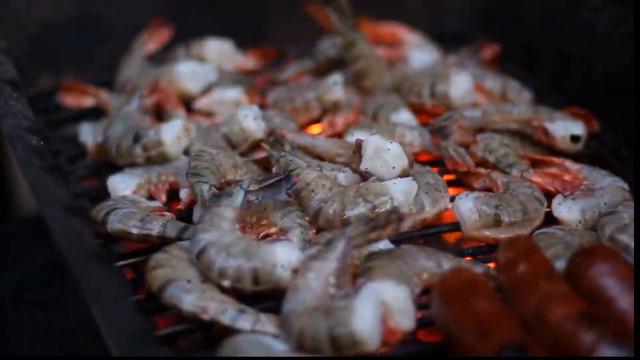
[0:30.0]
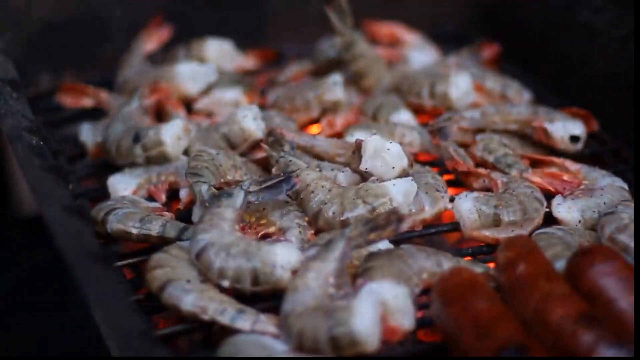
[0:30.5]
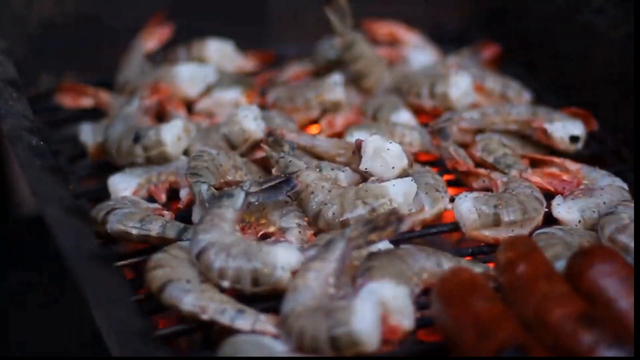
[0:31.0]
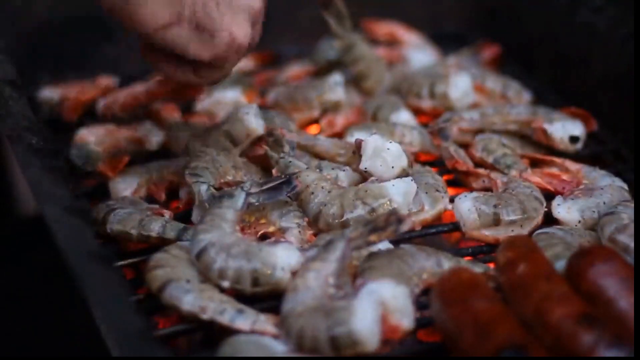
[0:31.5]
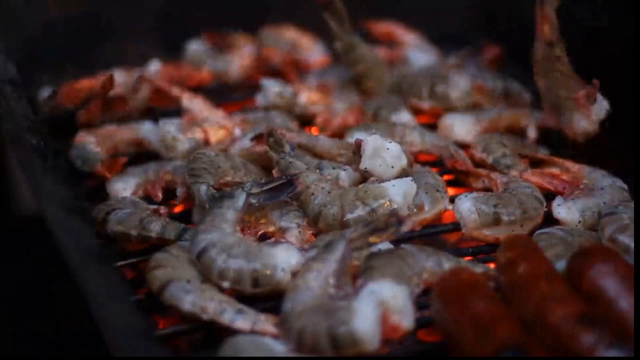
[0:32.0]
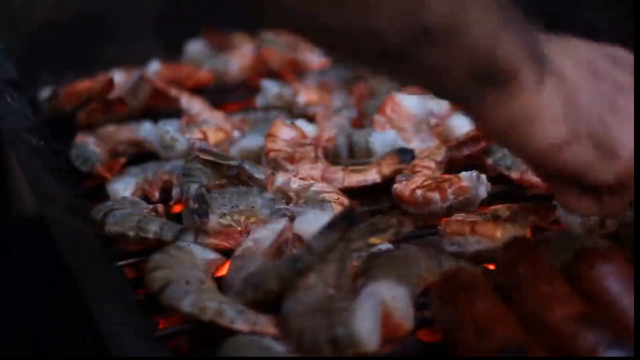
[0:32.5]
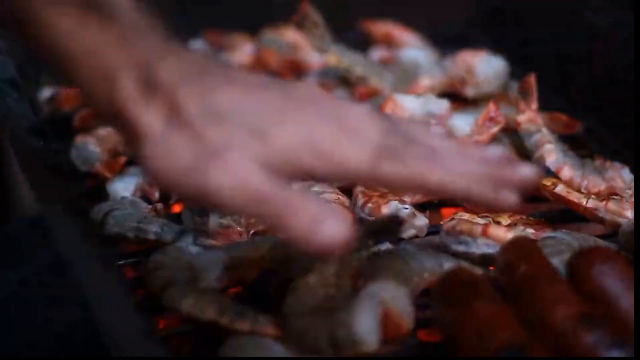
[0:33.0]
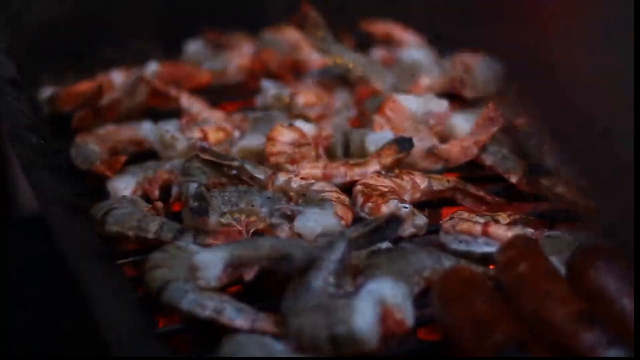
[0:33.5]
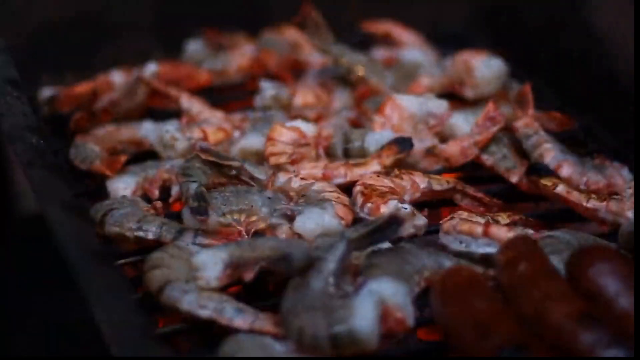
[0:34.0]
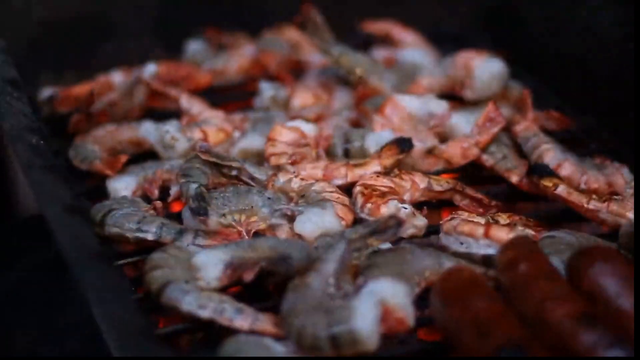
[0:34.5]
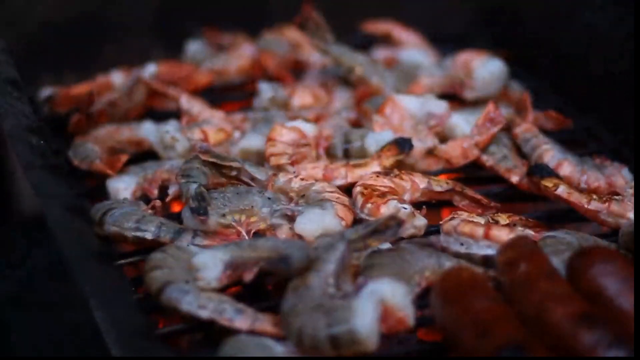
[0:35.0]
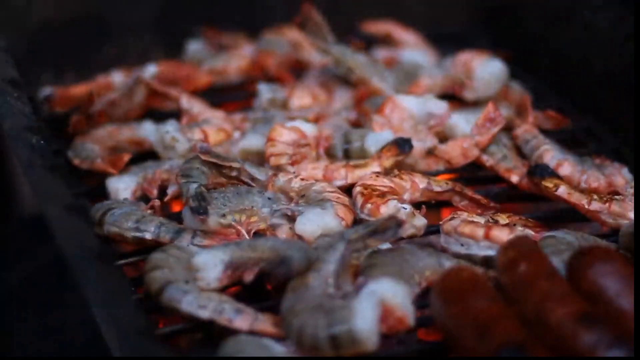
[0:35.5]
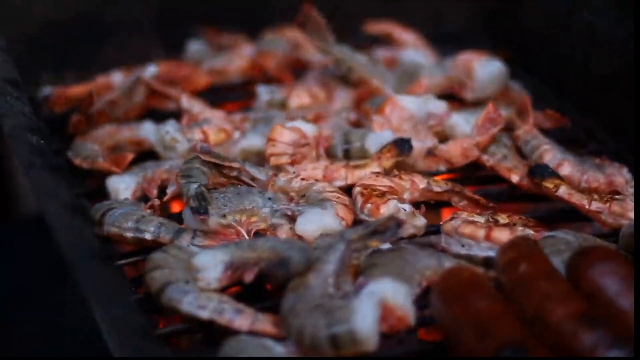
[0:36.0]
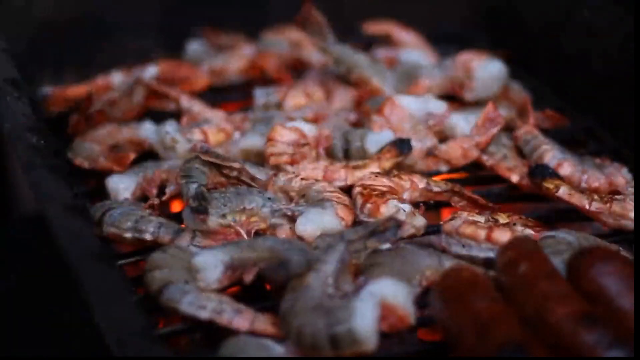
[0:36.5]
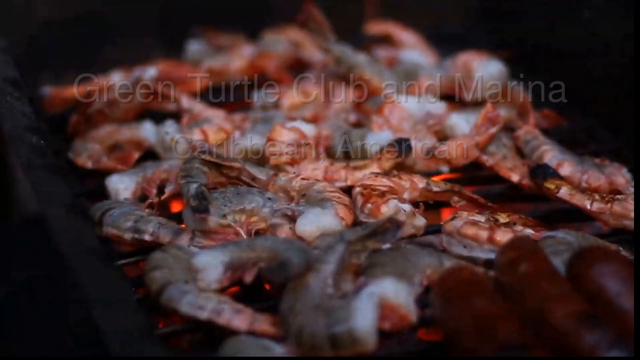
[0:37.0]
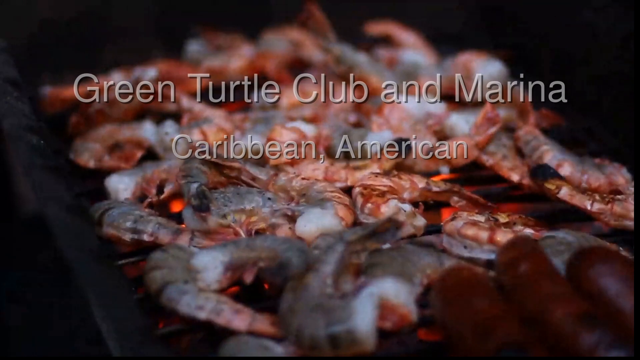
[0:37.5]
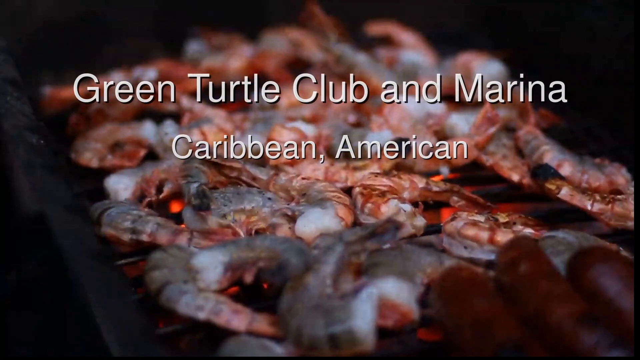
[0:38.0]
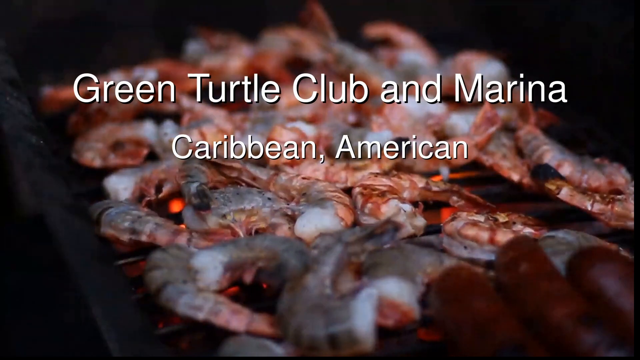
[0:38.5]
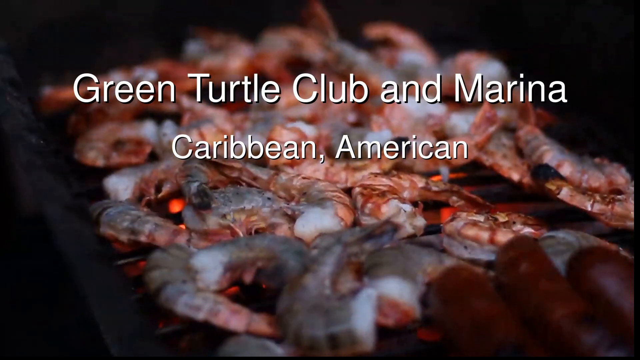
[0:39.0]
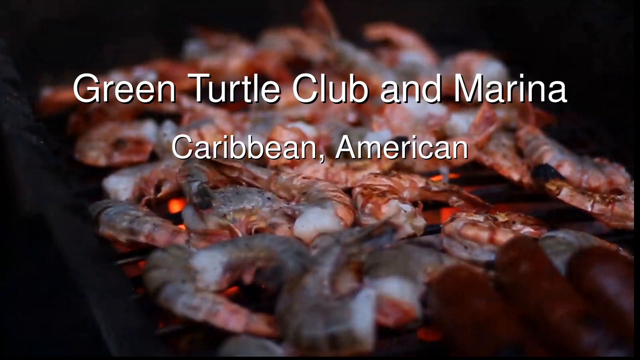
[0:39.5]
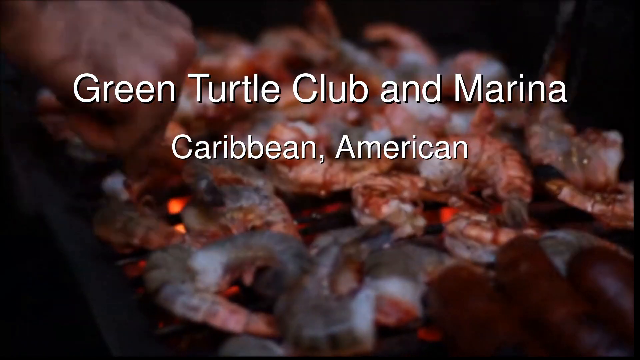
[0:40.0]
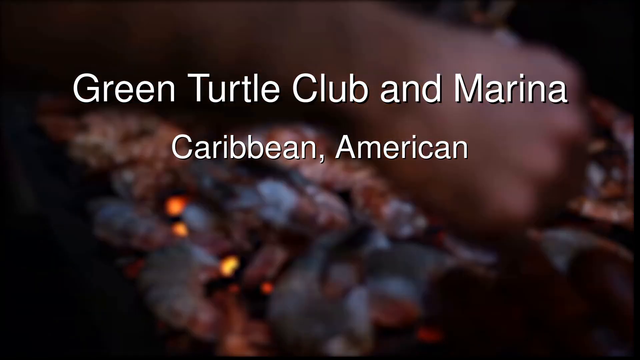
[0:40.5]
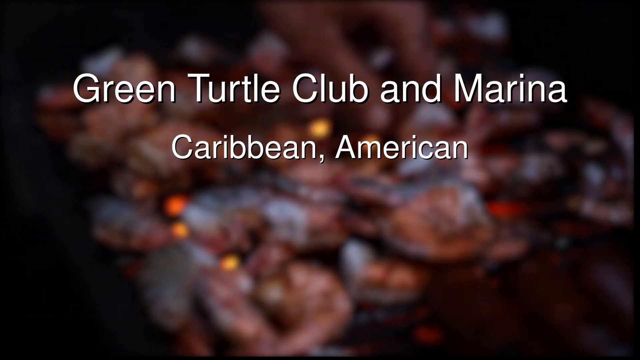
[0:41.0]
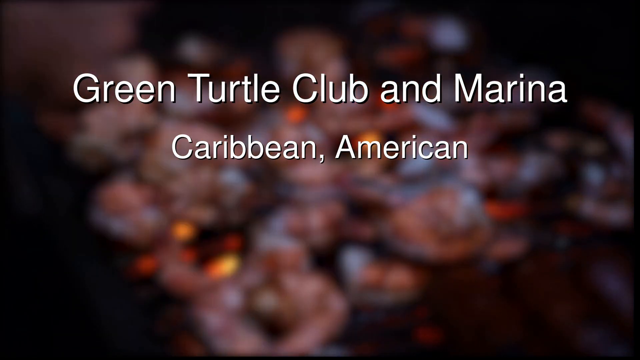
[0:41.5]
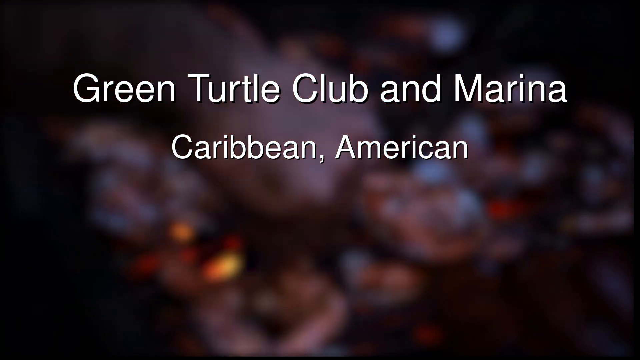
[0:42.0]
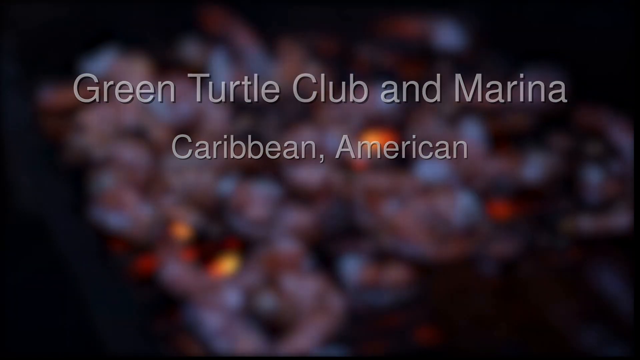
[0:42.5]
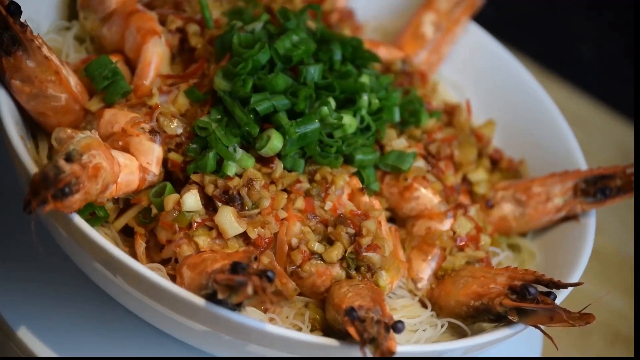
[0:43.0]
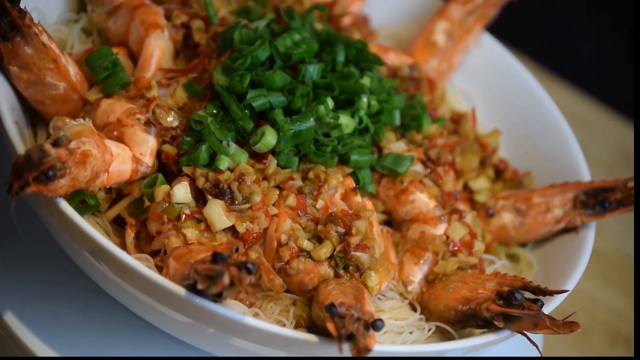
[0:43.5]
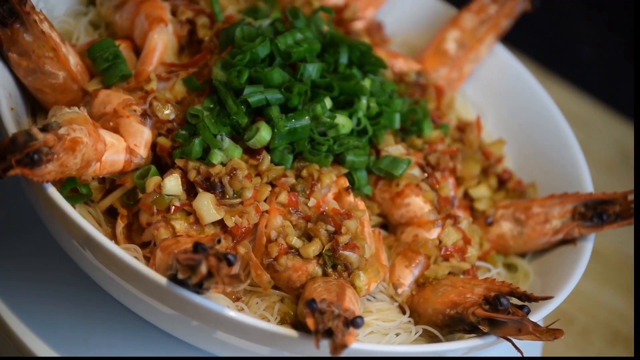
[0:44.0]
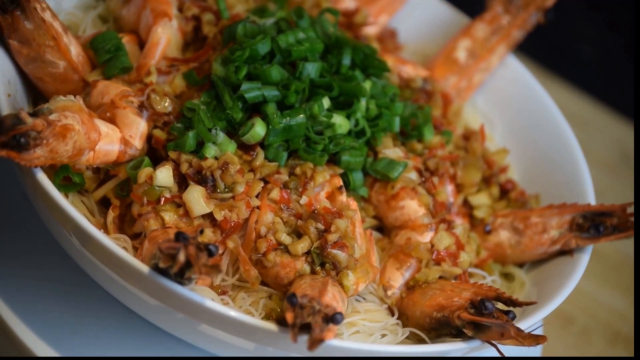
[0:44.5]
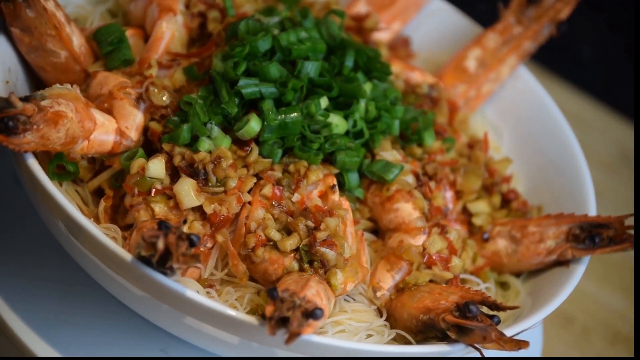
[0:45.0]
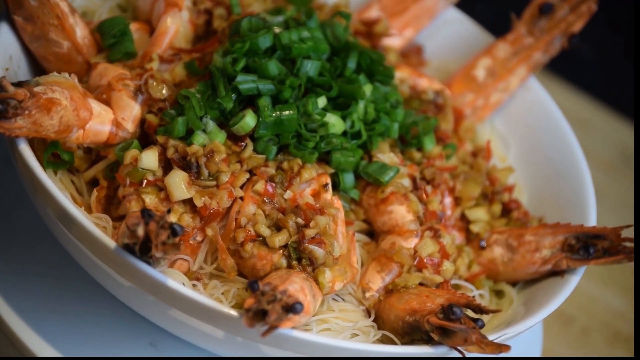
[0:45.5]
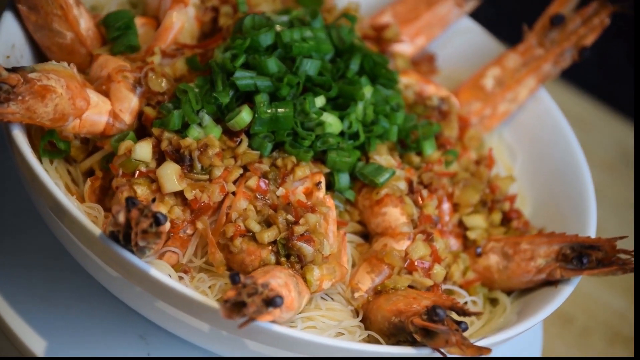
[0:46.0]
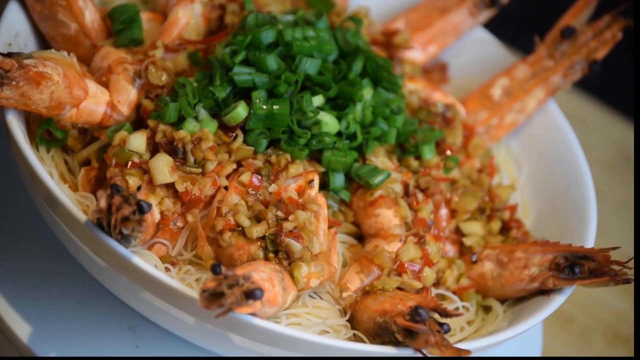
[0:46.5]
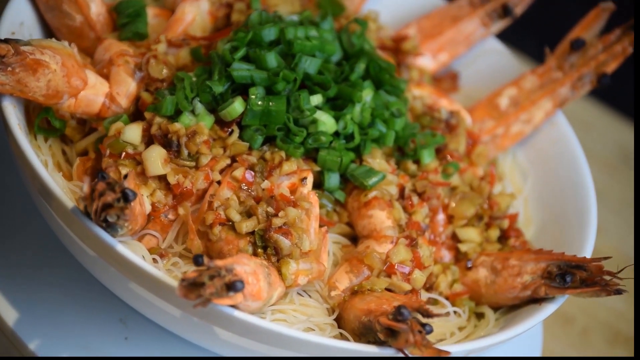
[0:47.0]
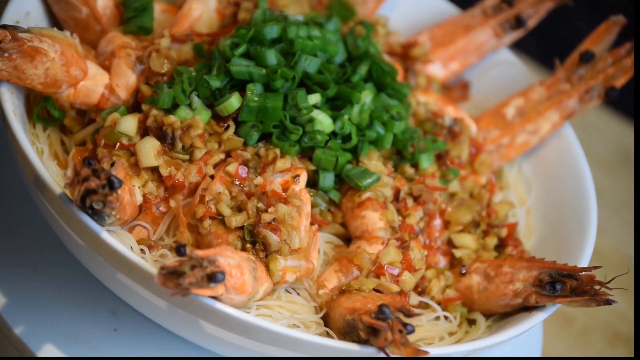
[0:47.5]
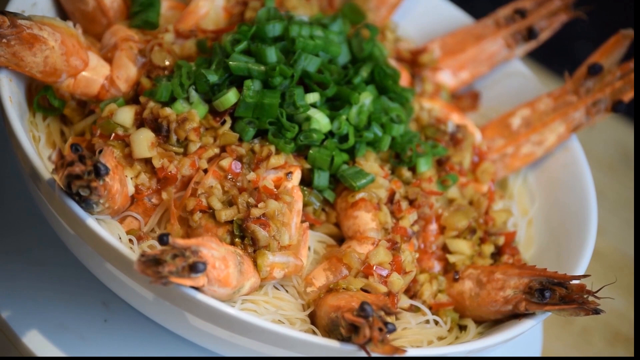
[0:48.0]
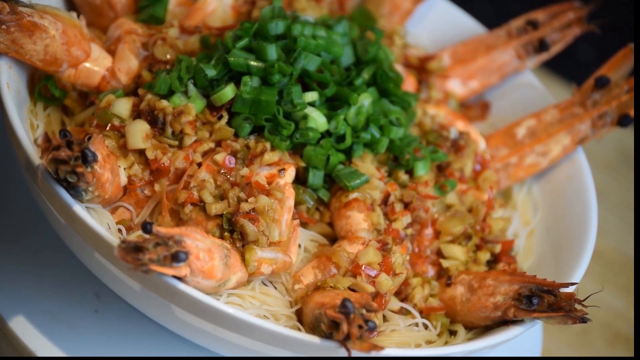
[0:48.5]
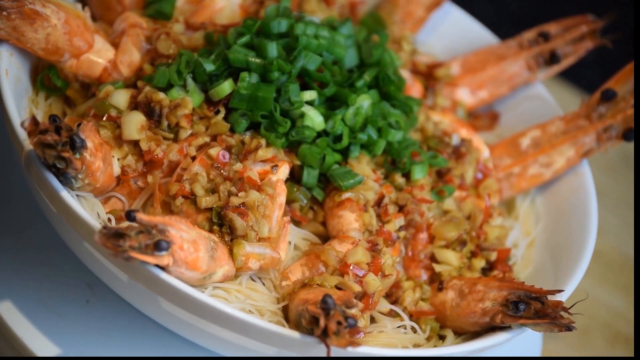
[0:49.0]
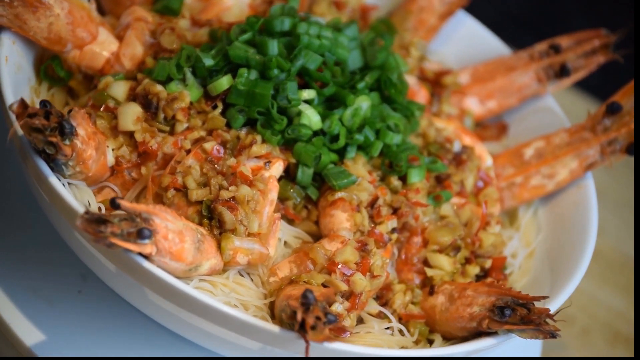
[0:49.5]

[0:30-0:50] What appears to be tiger shrimp cook on a grill in something like a sped-up time-lapse. The raw shrimp are flipped over by hand and with tongs, revealing an orange-pink cooked surface. White text appears overlaid on the video, reading "Green Turtle Club and Marina Caribbean American." Next comes a presentation of the finished dish: what must be a type of rice or similar grain, cooked and arranged in a bowl, topped with chopped scallions, with the tiger shrimp sort of arrayed in a circle along the edges of the bowl. It looks very similar to paella. The dish is sort of rotating as it is shot at an angle.